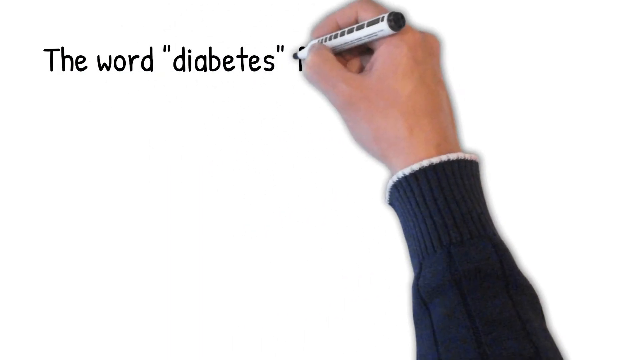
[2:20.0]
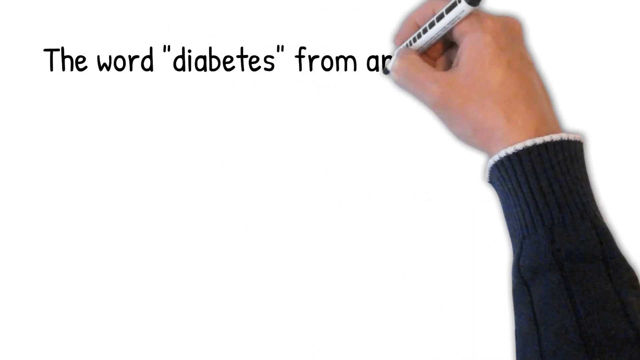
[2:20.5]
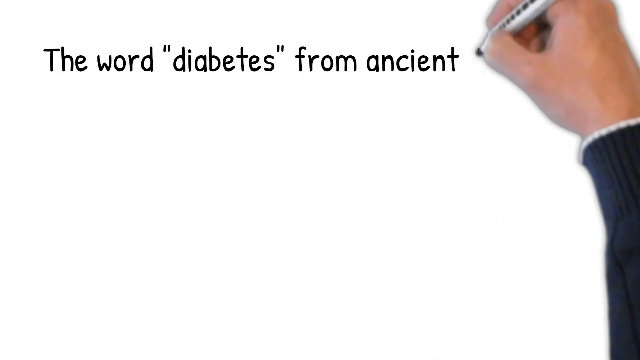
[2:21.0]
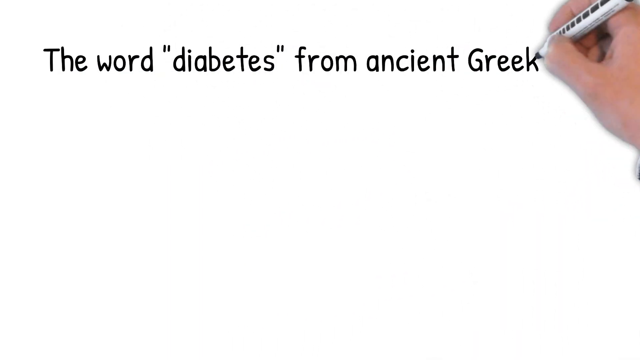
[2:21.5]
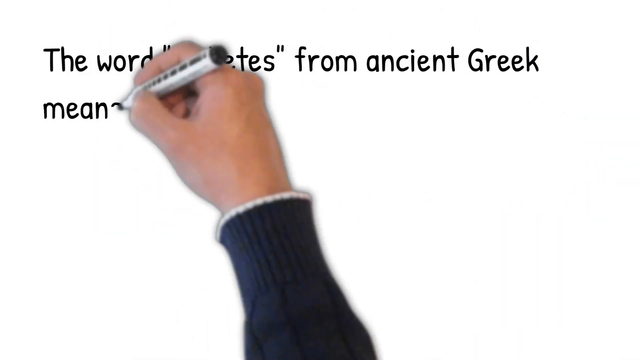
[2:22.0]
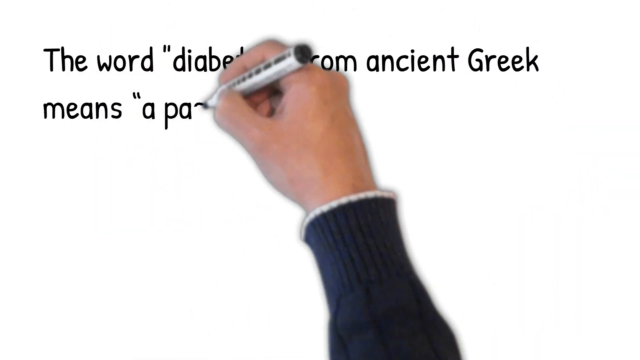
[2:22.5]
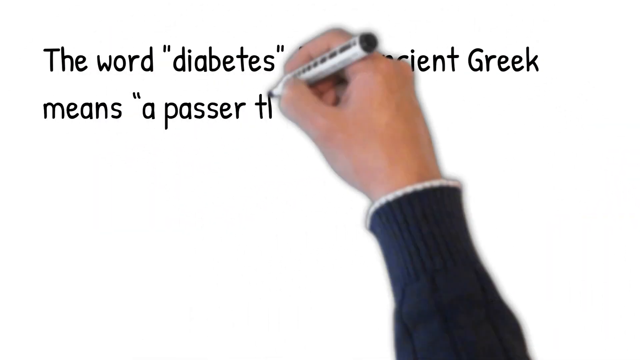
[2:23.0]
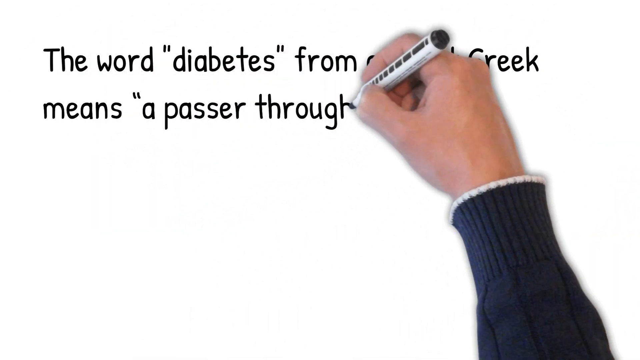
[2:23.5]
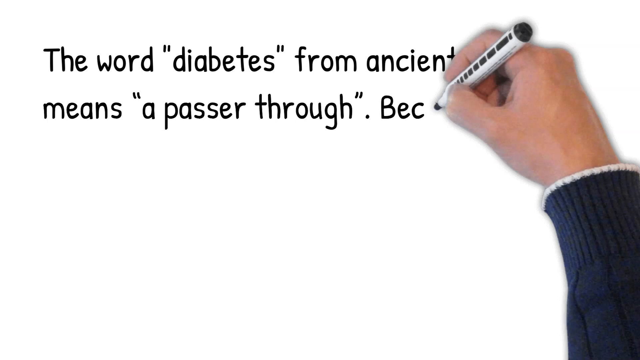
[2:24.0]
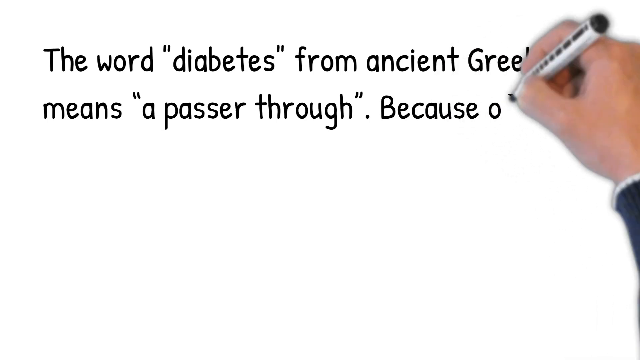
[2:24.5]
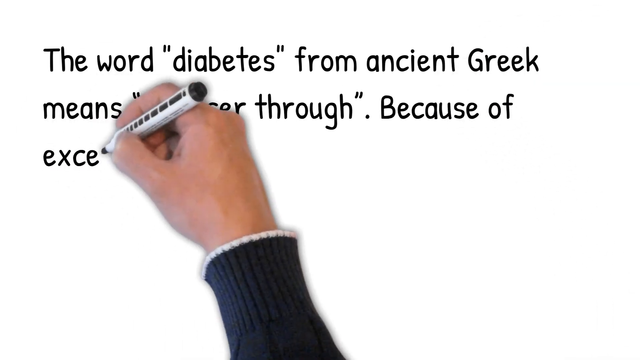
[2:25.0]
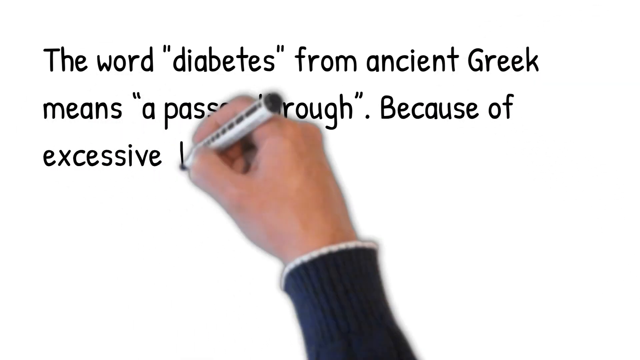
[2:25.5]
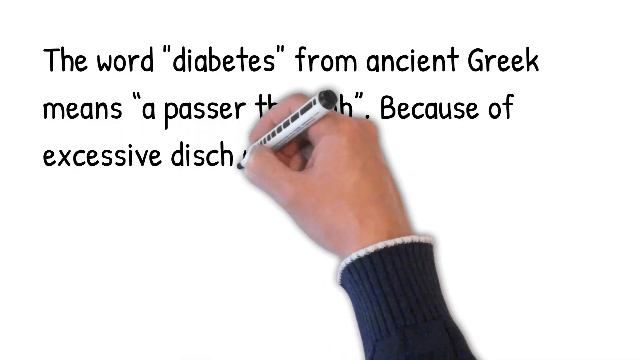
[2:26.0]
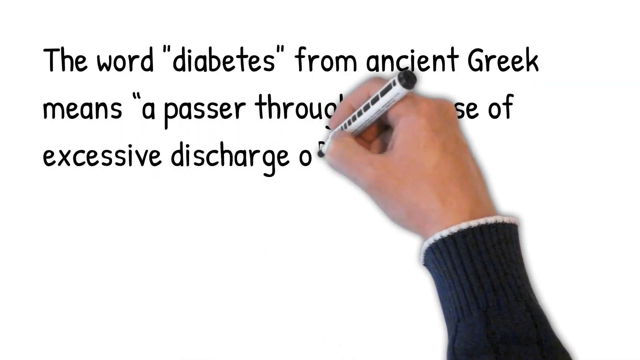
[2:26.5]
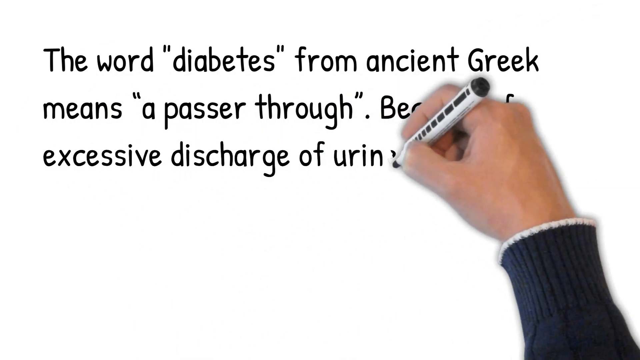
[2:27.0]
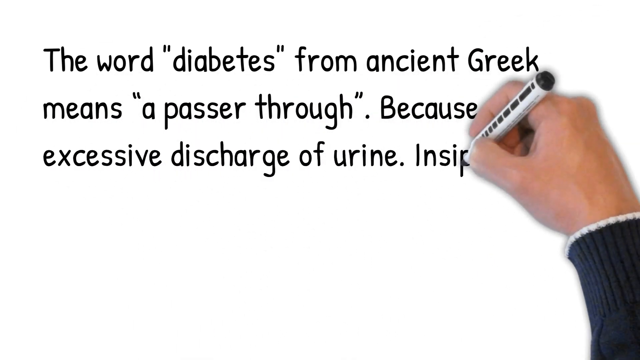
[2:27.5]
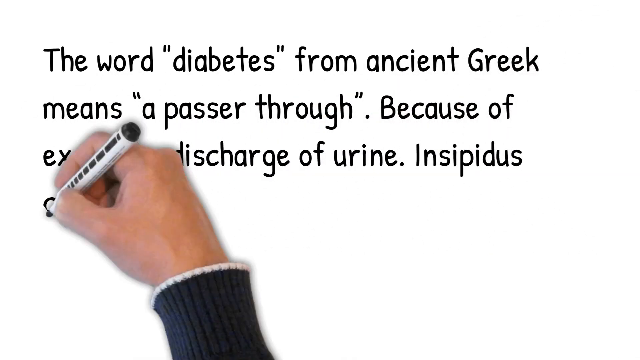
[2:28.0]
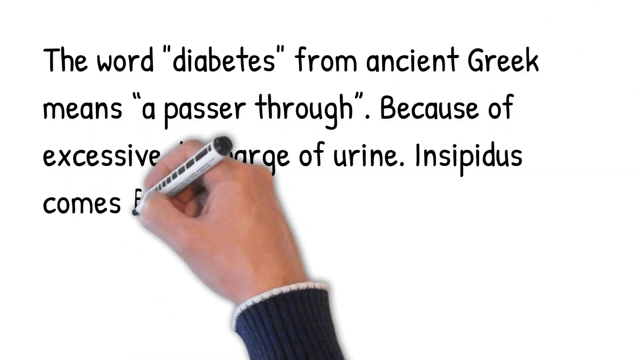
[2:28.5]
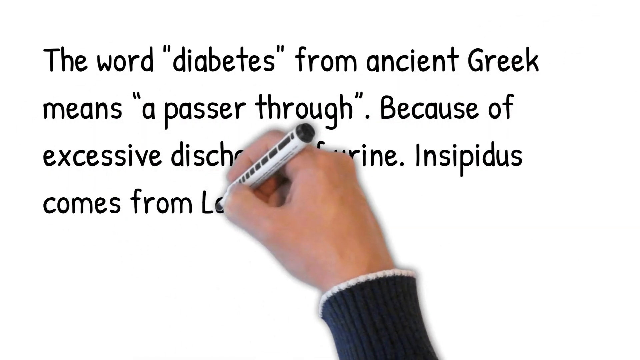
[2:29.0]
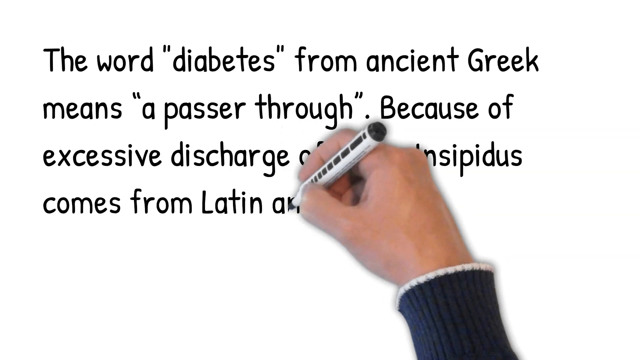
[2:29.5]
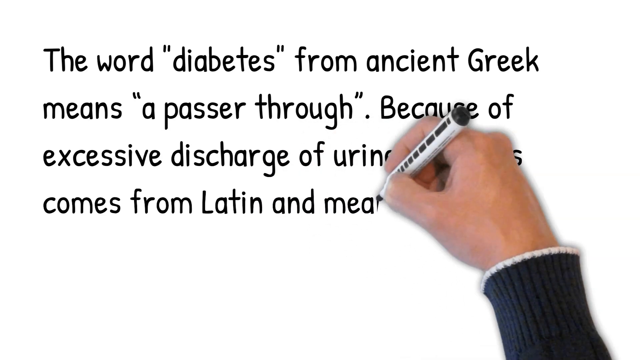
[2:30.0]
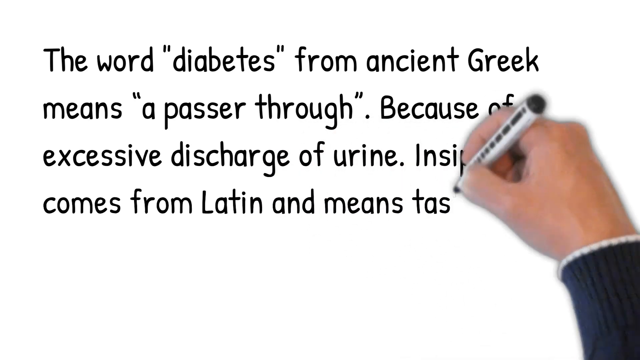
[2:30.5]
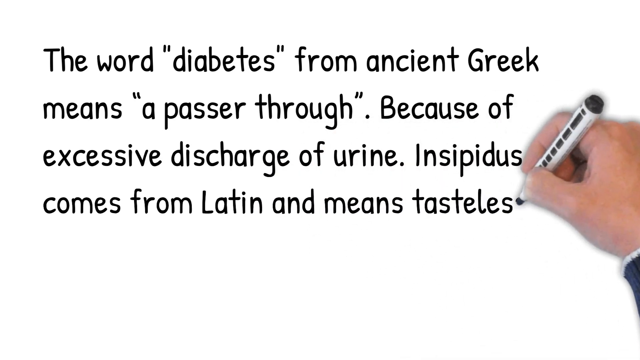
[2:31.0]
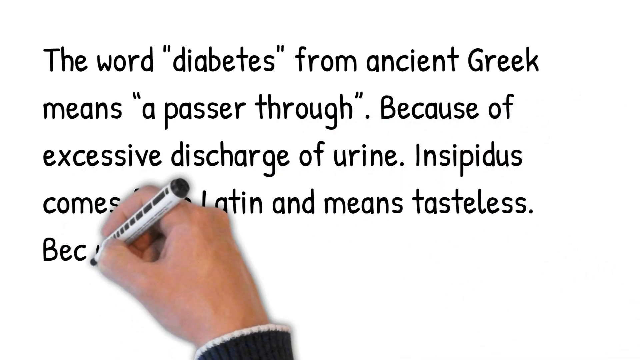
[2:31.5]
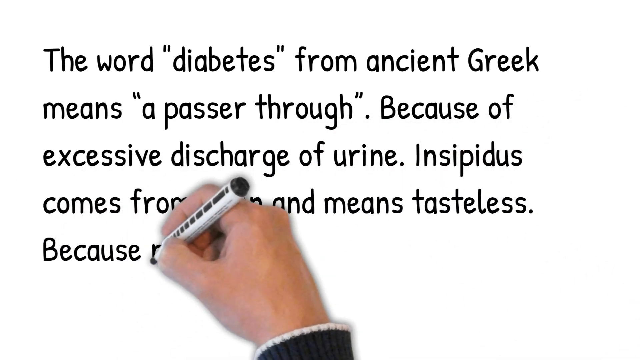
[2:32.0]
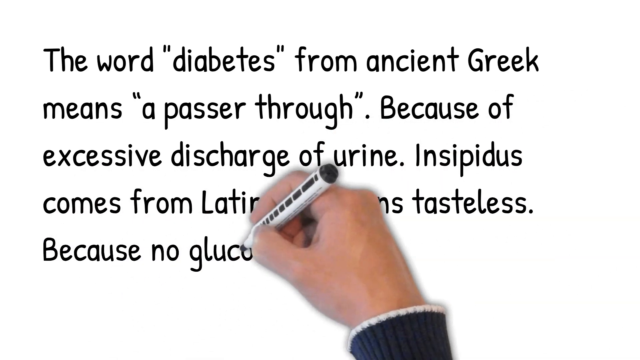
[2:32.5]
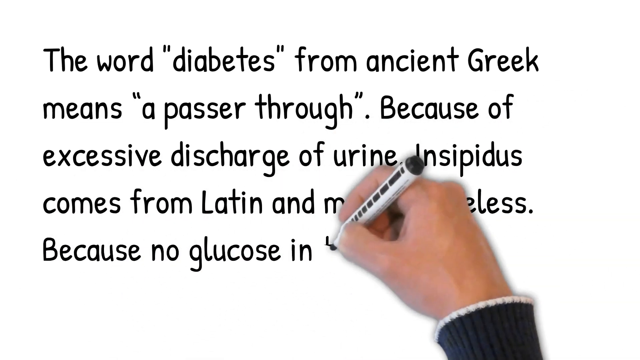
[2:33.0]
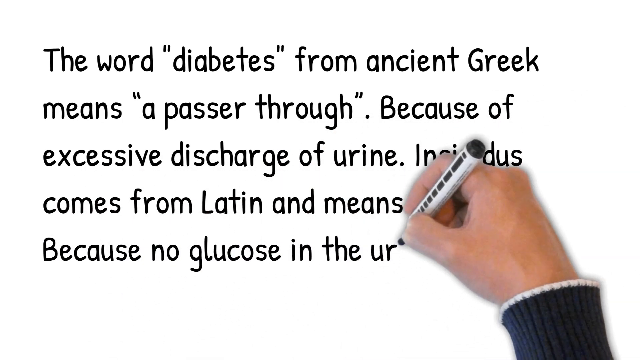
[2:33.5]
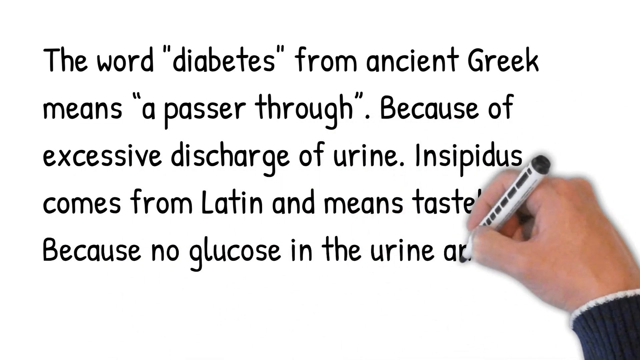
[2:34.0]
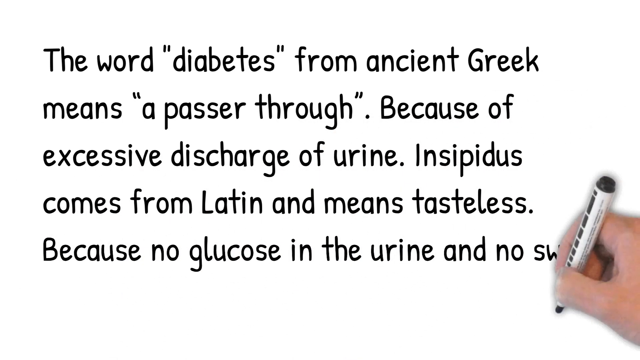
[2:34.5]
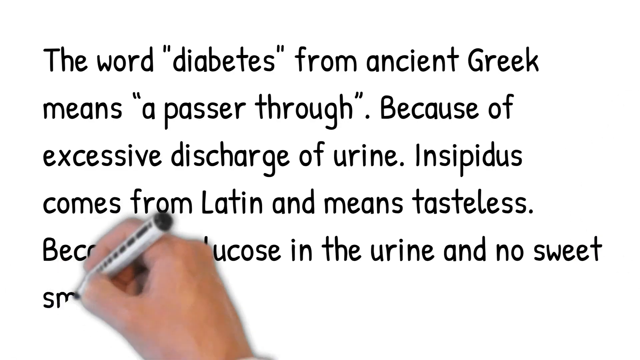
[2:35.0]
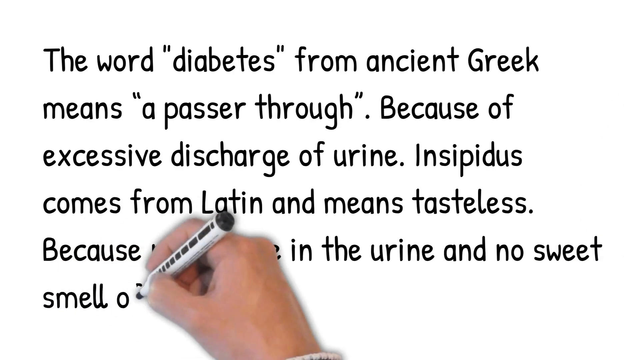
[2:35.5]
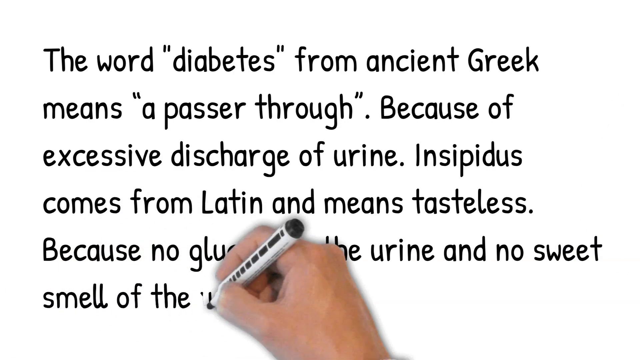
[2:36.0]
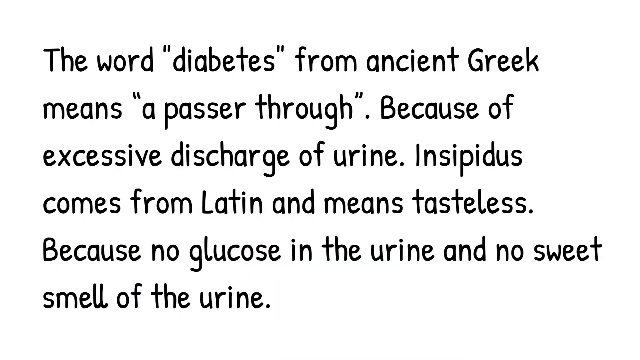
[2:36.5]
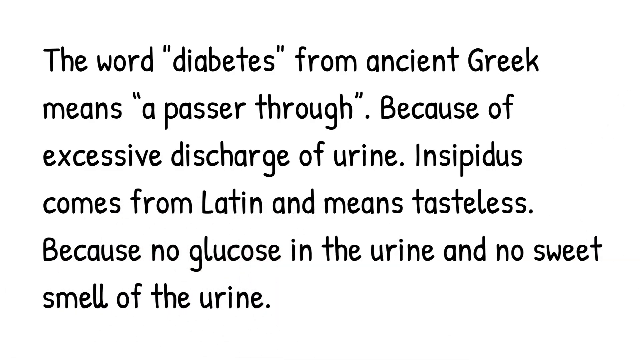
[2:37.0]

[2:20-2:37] On an almost blank screen, the man with the pen writes very quickly: "diabetes from ancient Greek means a passer through because of excessive discharge of urine. Insipidus comes from Latin and means tasteless because no glucose in the urine and no sweet smell of the urine." Everything is written in black on a white background, and this is the only slide, so the background does not change. The man wears a blue sweater with white edging. The pen or marker is white with black dots on the side and a black top. Apart from the new information about diabetes, little changes.